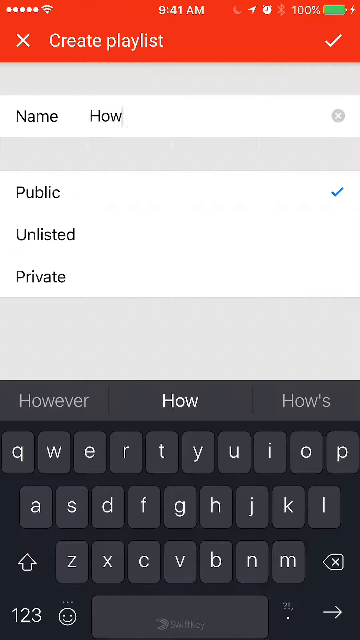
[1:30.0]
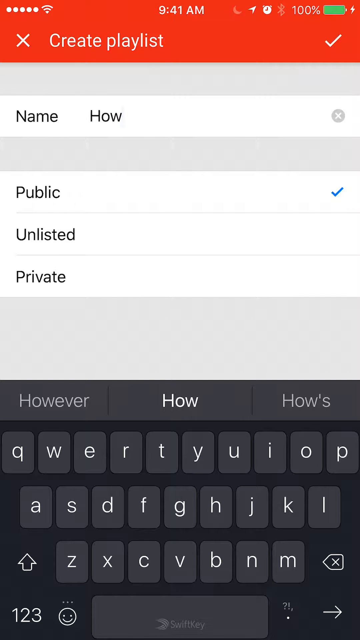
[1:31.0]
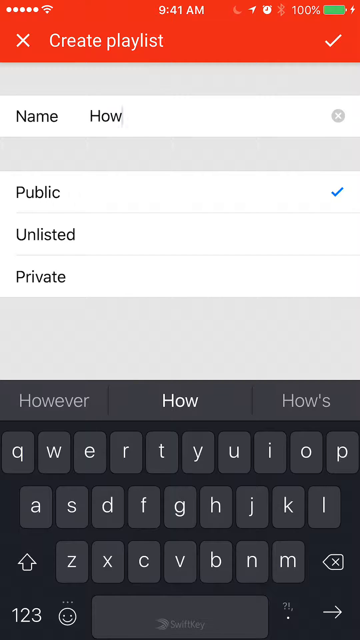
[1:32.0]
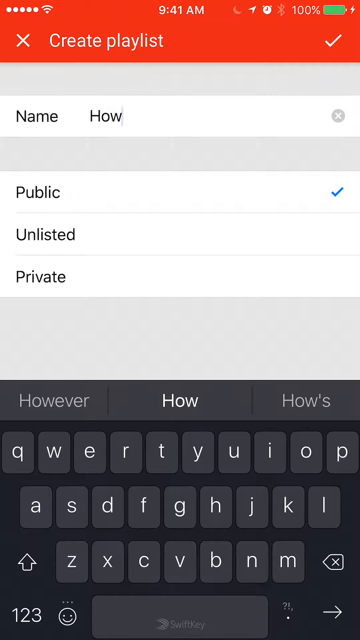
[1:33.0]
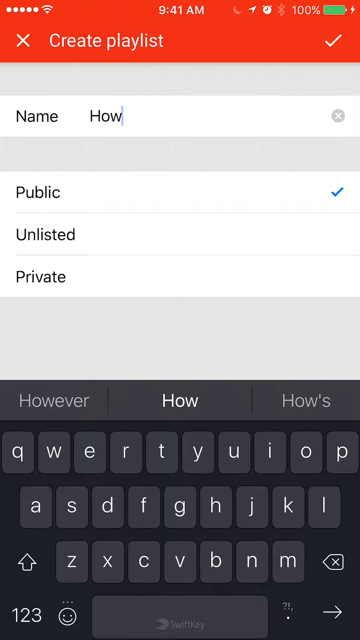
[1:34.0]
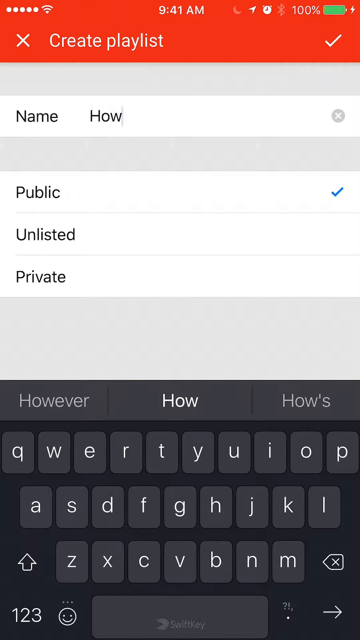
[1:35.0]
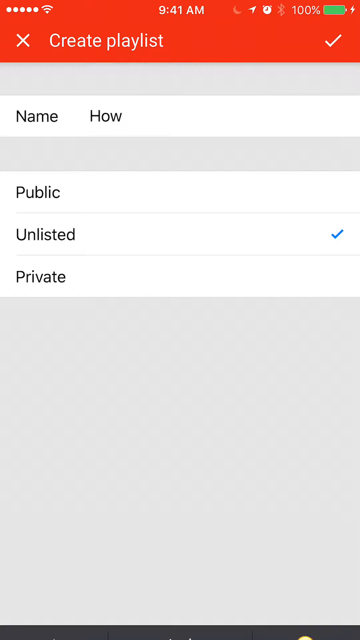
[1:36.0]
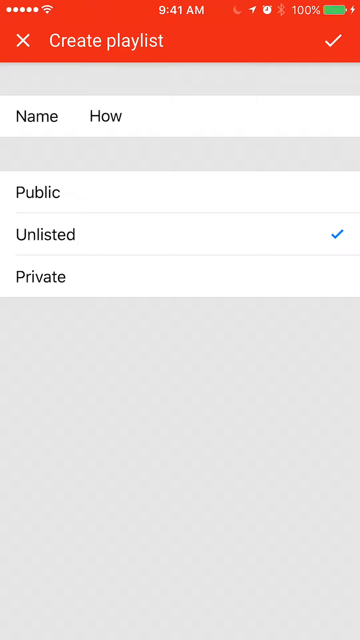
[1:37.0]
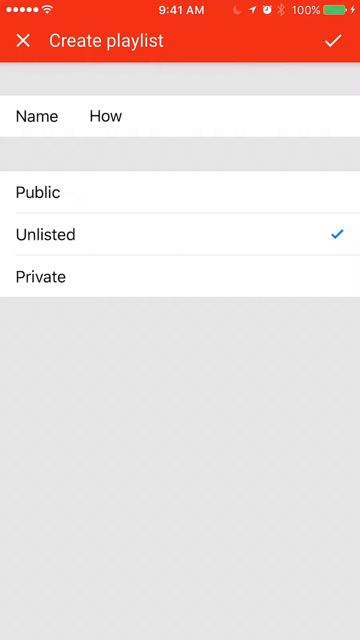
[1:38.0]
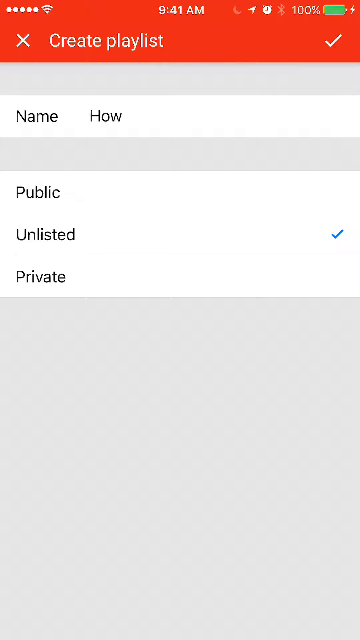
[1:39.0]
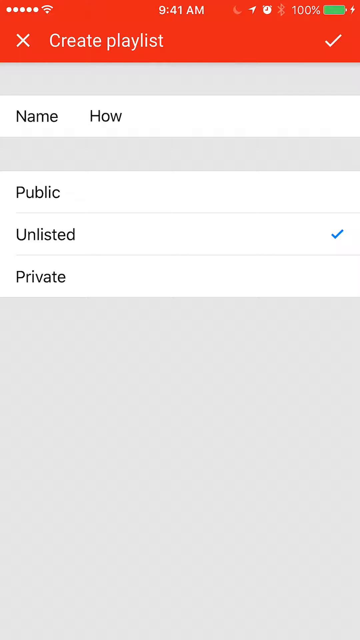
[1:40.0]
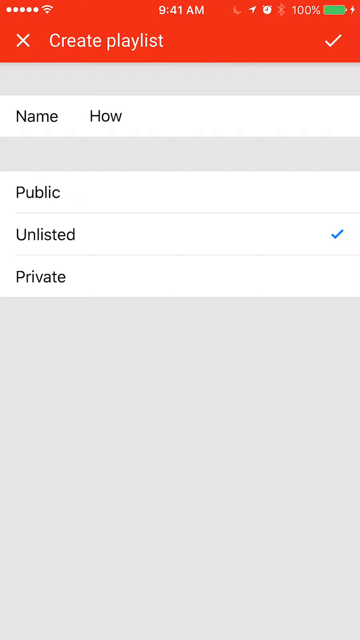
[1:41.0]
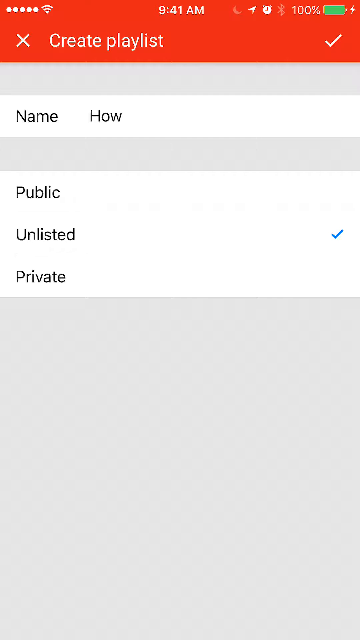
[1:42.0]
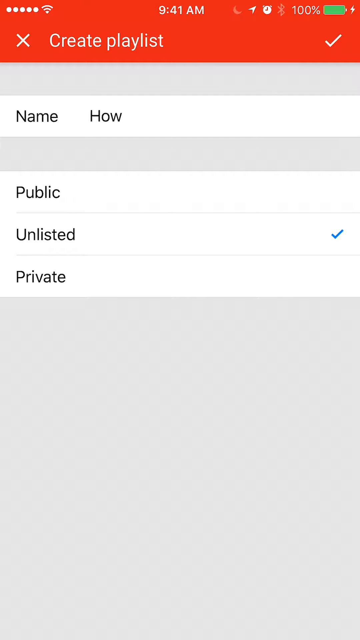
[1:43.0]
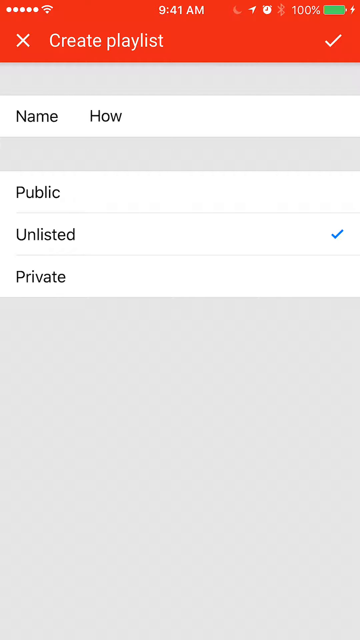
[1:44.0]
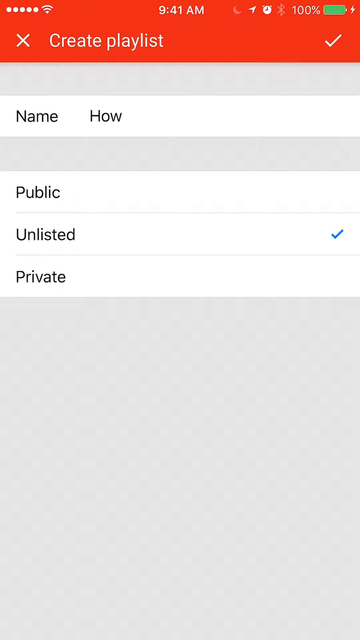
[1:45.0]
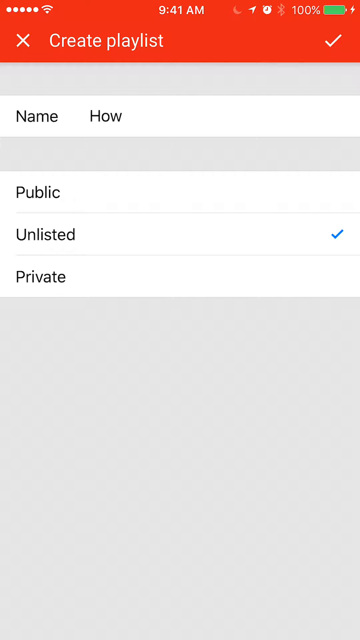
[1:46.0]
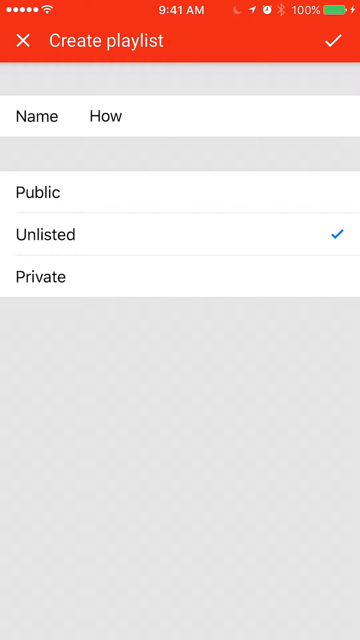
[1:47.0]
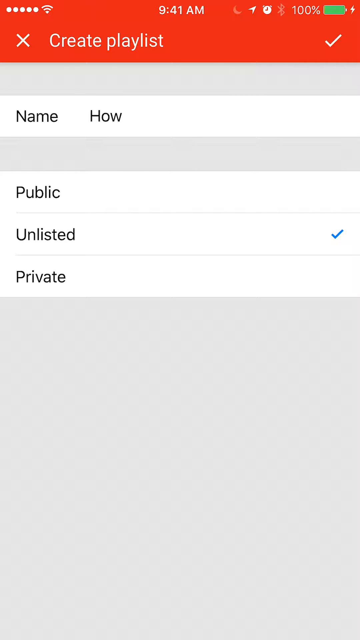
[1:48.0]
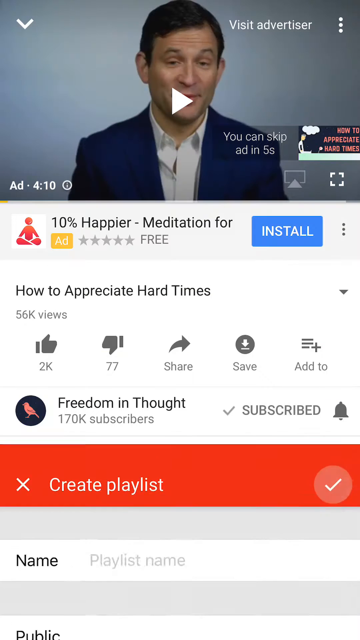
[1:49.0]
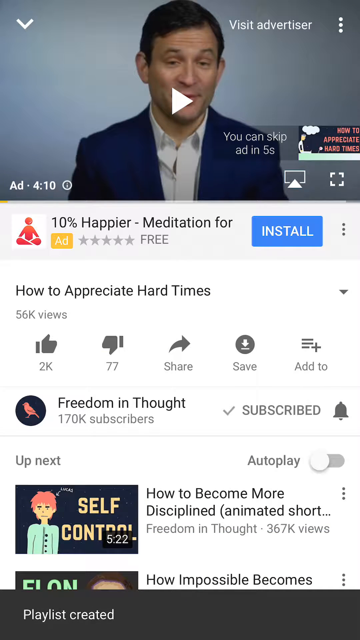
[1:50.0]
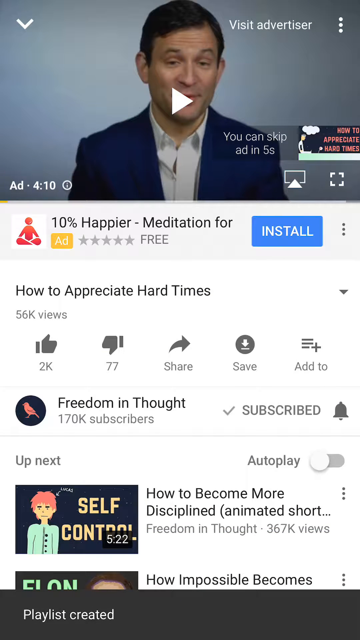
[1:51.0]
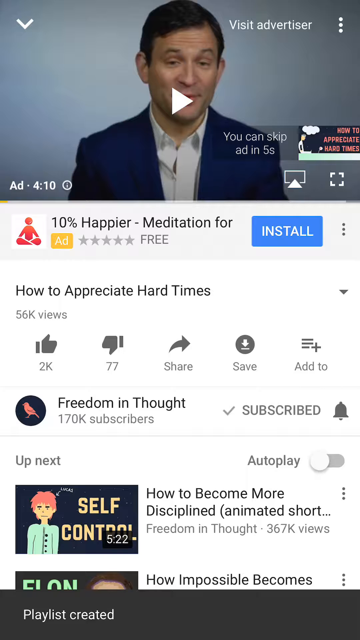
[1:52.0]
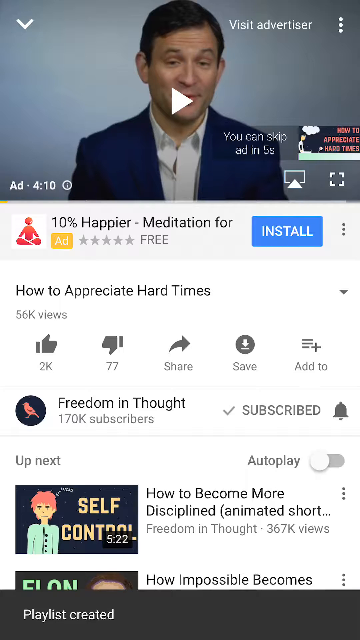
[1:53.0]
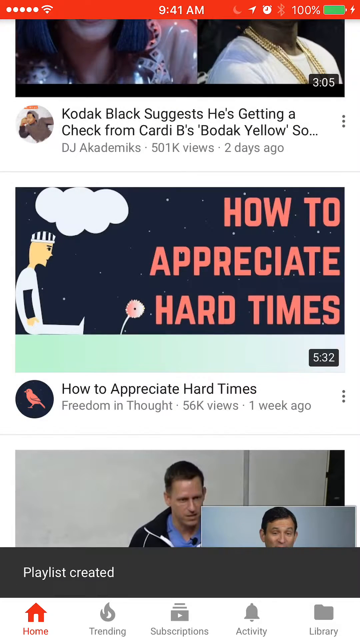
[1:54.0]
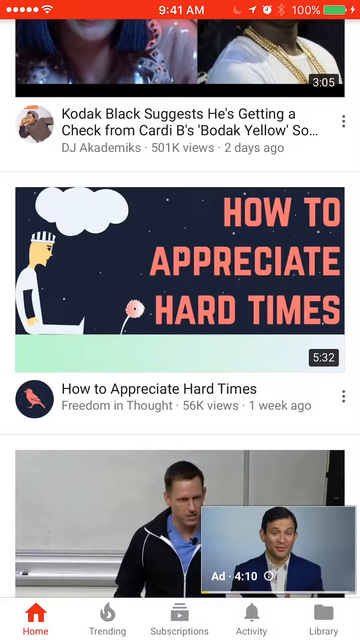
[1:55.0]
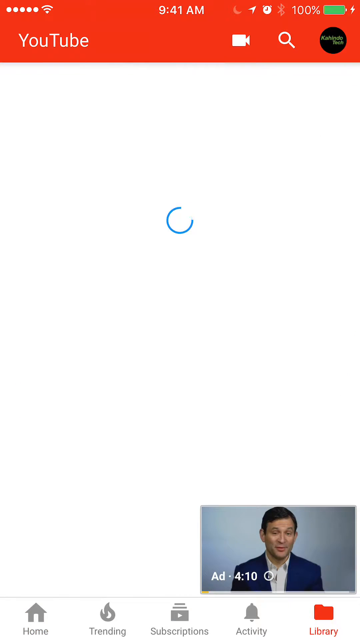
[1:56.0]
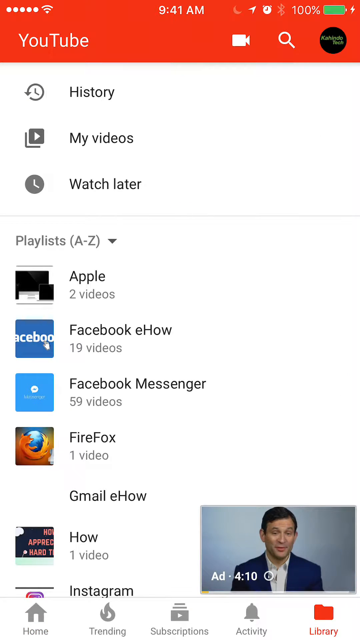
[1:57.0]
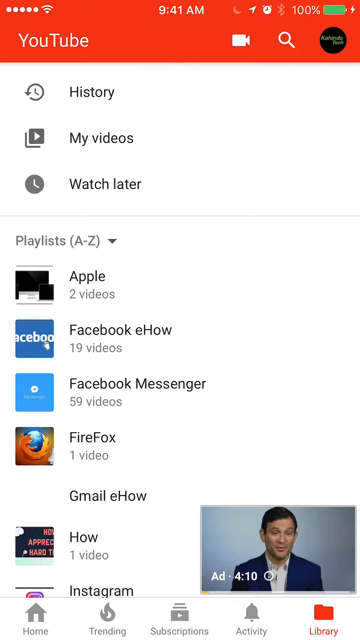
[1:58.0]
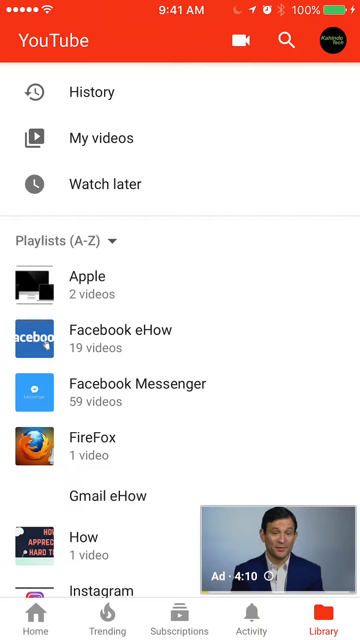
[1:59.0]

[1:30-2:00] At the top of a mobile device screen is a red bar with an X on the left, a check mark on the right, and the title "create playlist". Below, a label "Name" has a text input box to its right containing the text "how", and to the right of that a gray circle with a white X for deleting the name. Underneath is a label "Public" with a blue check mark on its right, followed by the labels "Unlisted" and "Private", neither with a check mark. The user seems to save the playlist; the window closes and a black tab at the bottom of the screen reads "playlist created" in white font. The YouTube video page for "How to Appreciate Hard Times" is then shown, with a paused ad of a brown-haired man in a blue blazer and white button-down shirt speaking to the camera. The user seems to kind of minimize the video into a small frame on the bottom right side of the screen, and it looks like the YouTube home page is shown with a few recommended videos. The user clicks the Library button, all the way on the right of the bottom navigation menu, opening the library with menu options "history", "my videos" and "watch later", and a list of the user's playlists underneath.